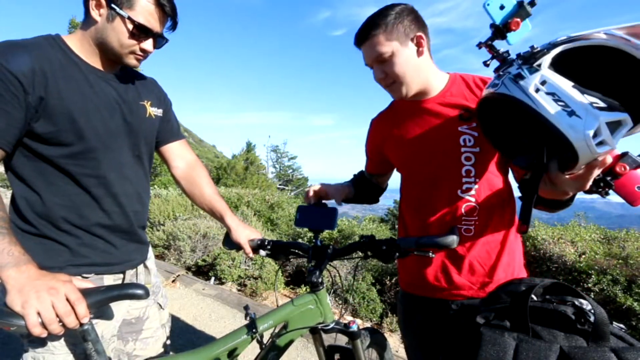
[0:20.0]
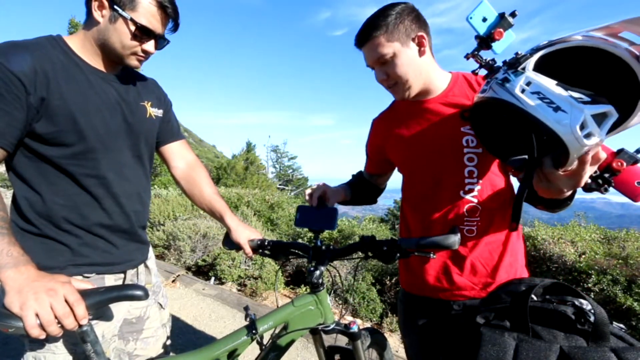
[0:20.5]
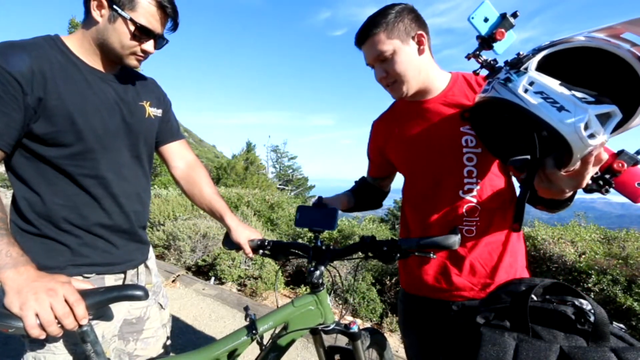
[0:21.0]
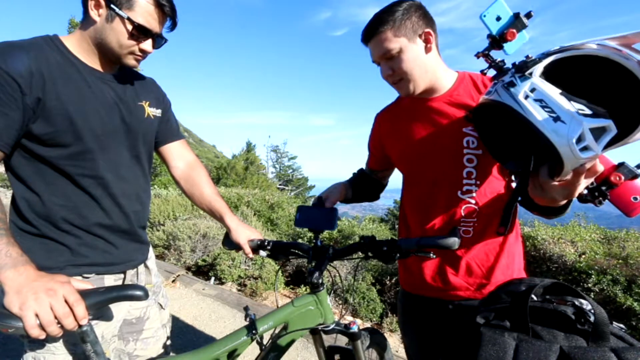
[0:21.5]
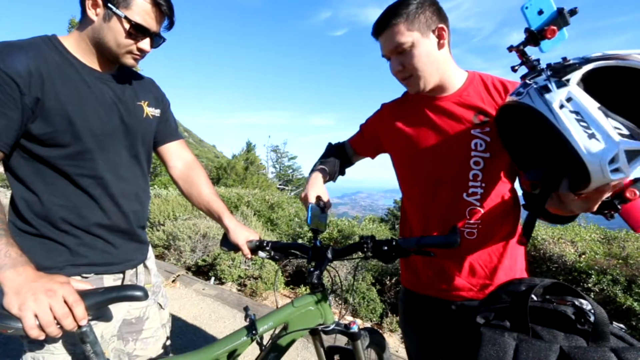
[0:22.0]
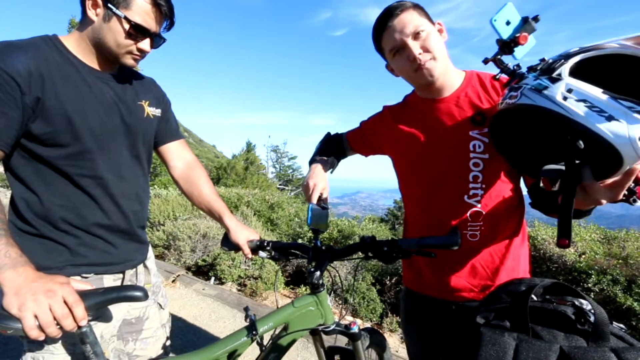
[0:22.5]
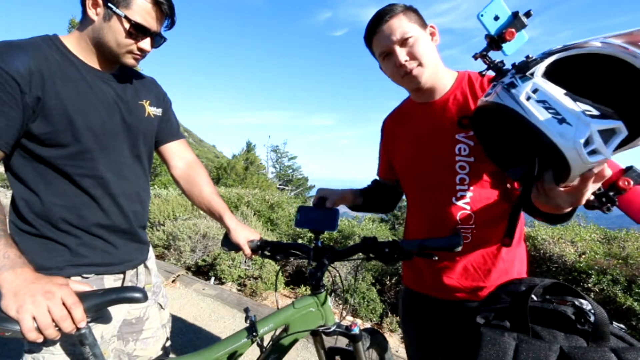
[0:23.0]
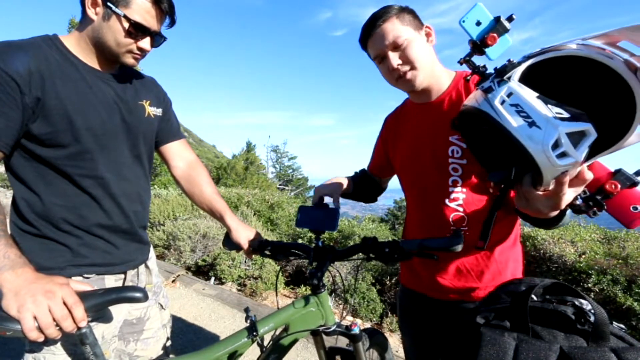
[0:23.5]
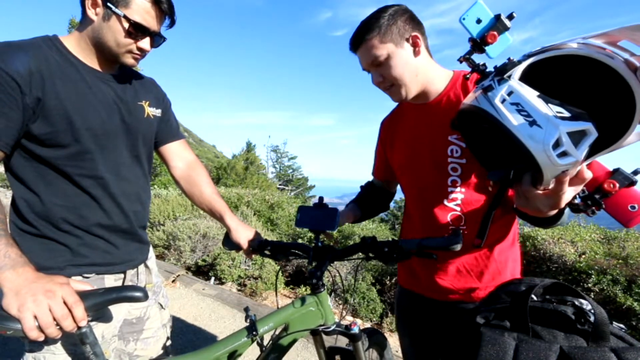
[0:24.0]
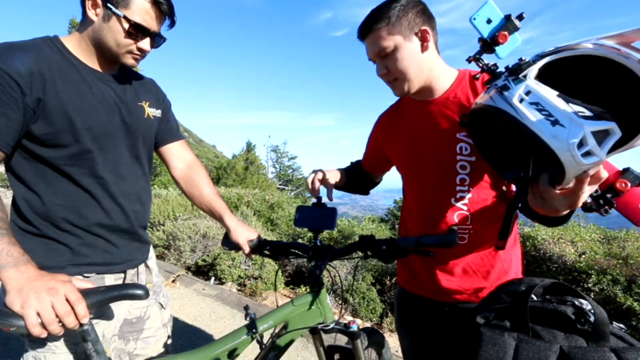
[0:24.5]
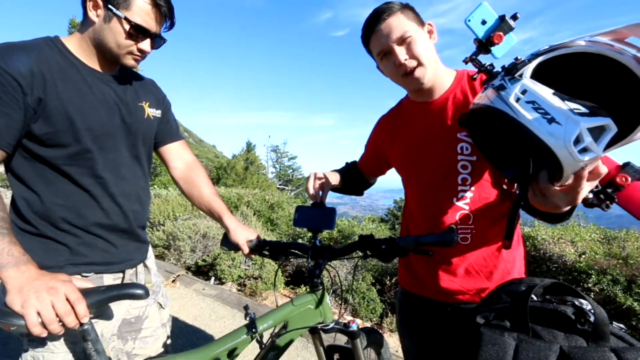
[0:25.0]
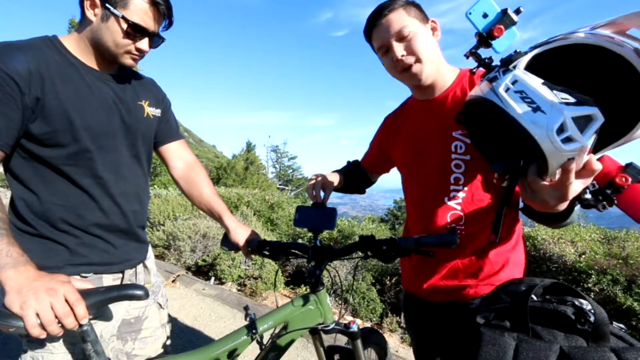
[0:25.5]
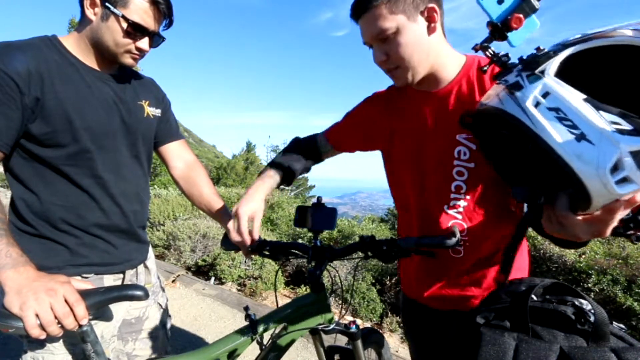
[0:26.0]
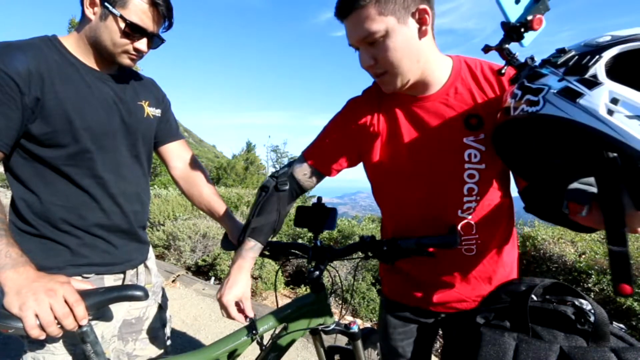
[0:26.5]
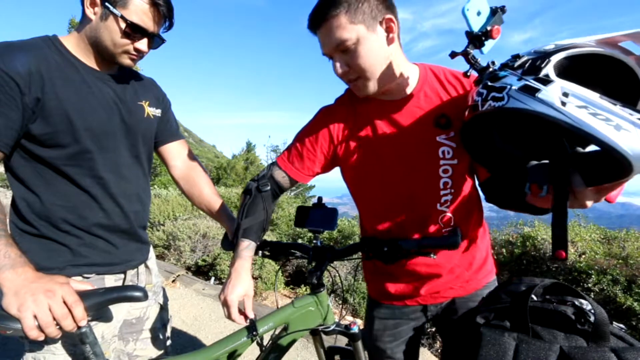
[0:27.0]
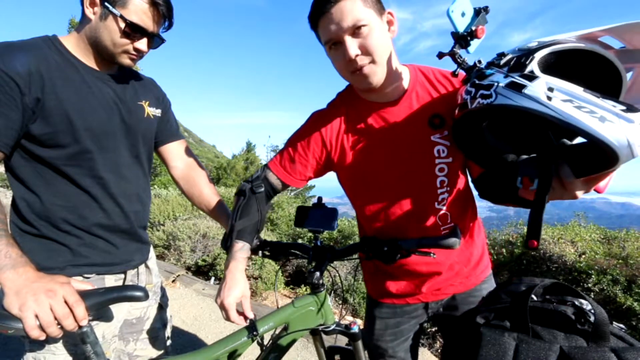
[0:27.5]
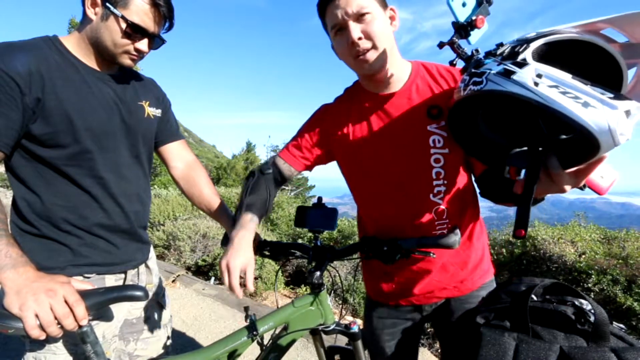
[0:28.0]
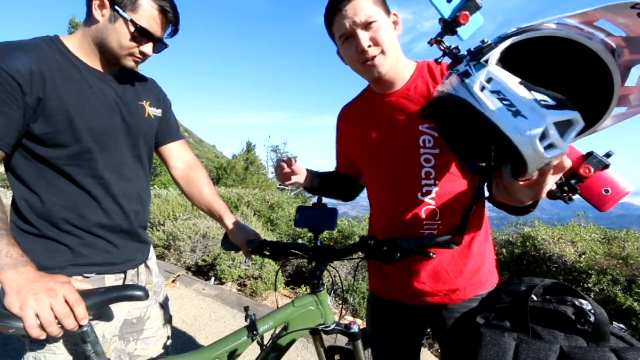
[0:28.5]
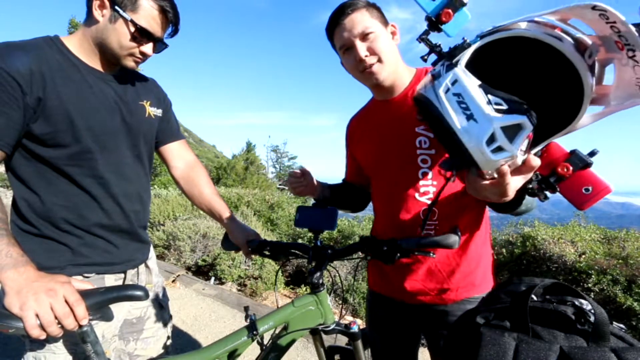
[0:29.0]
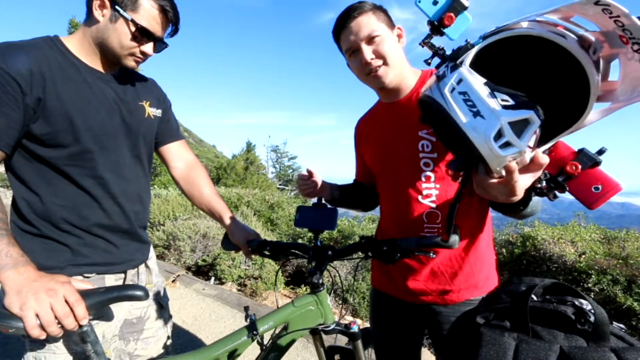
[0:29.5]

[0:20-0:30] Two young men stand on what looks like the edge of a mountainous area. Their clothing and the amount of greenery suggest the weather is quite warm. Pine trees and bushes in the background are vividly green, and the sky is very blue with some light, wispy white clouds. The two Caucasian young men stand in front of the camera. The man on the left grips a bicycle. The man on the right holds a white helmet equipped with two to three phones attached on both sides, and the front of the helmet bears the logo "Fox" in black text. The man holding the helmet puts his right hand on a phone that is now positioned in the front of the steering wheel. He wears a red shirt that reads "Velocity Clip" running vertically on the right side.